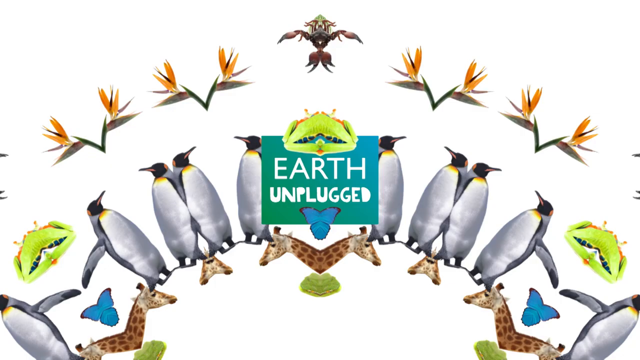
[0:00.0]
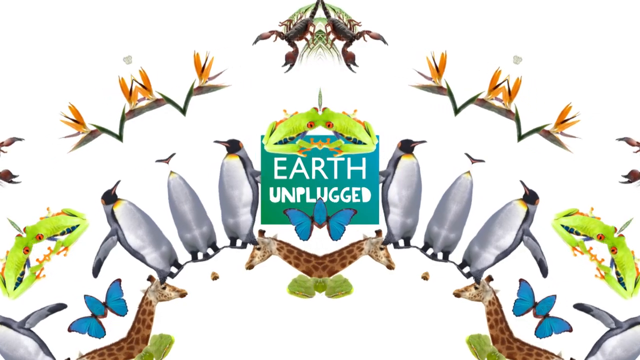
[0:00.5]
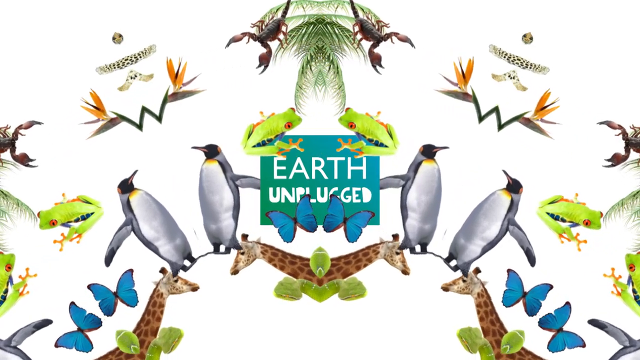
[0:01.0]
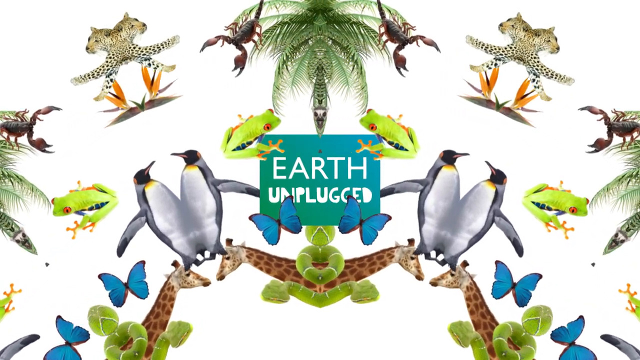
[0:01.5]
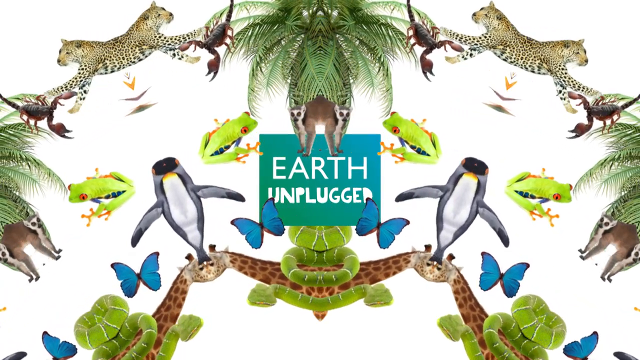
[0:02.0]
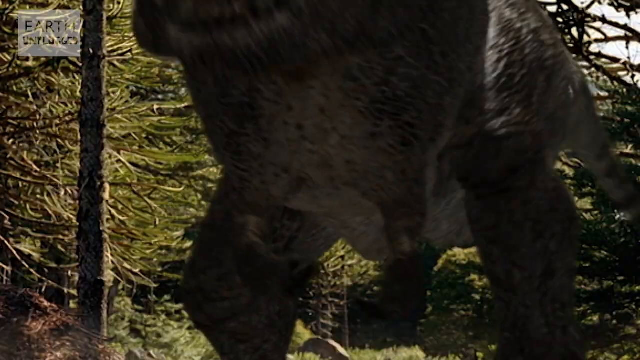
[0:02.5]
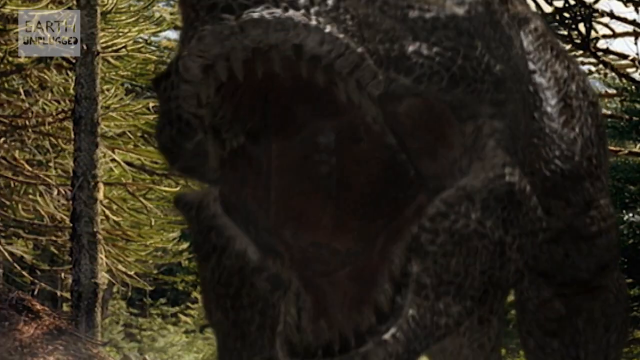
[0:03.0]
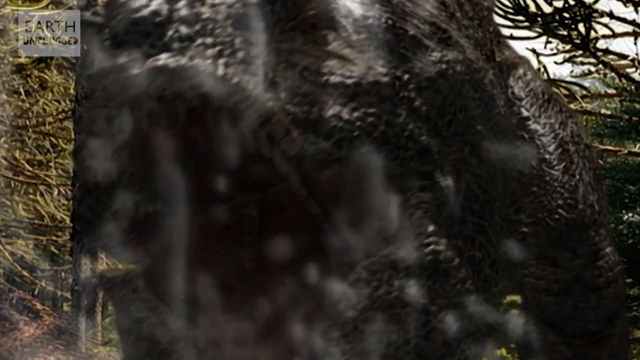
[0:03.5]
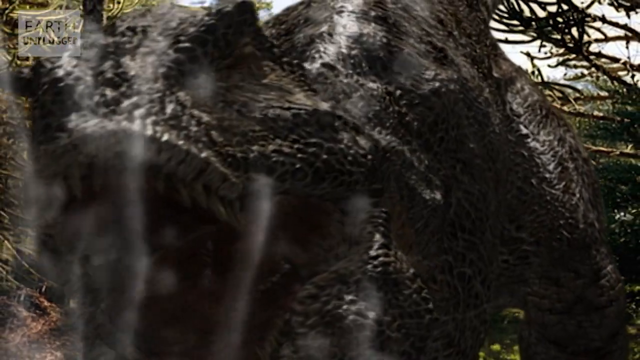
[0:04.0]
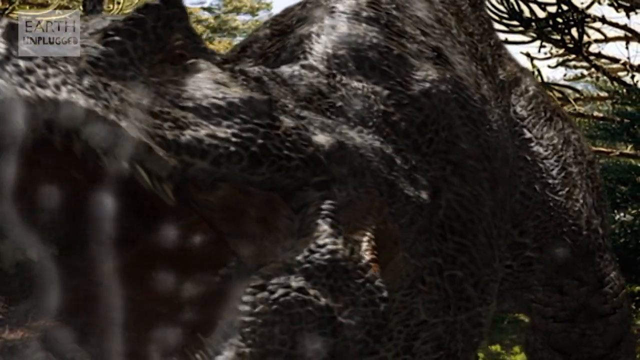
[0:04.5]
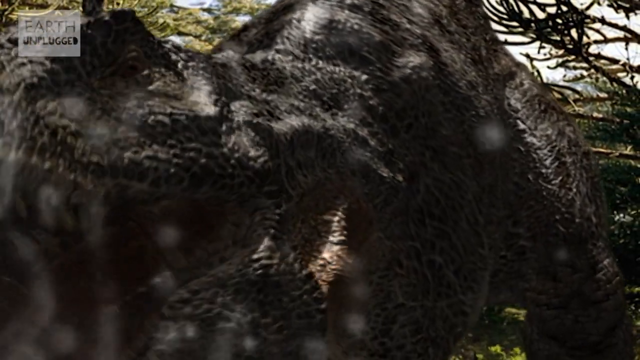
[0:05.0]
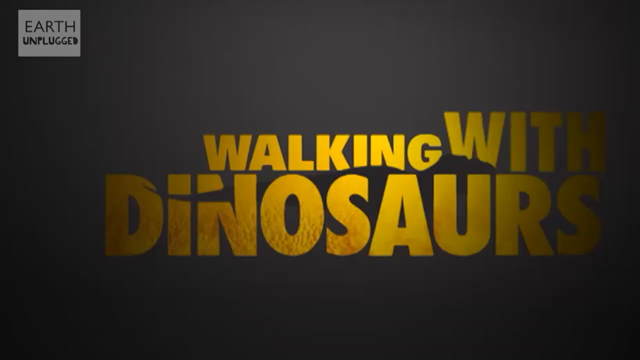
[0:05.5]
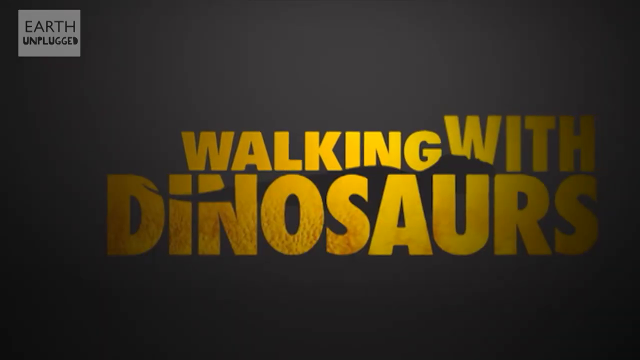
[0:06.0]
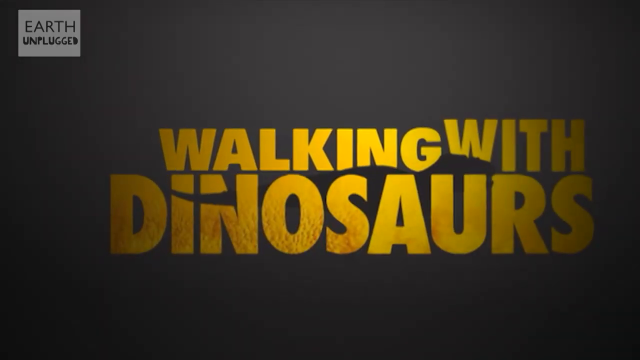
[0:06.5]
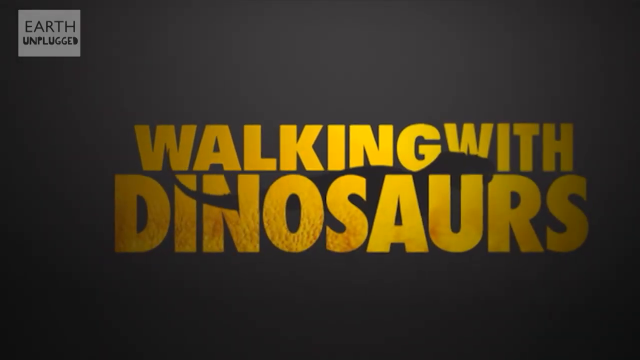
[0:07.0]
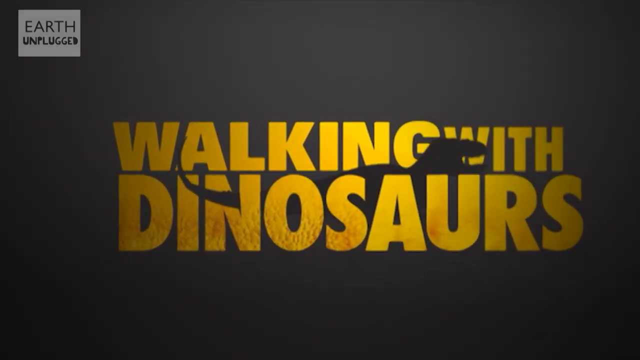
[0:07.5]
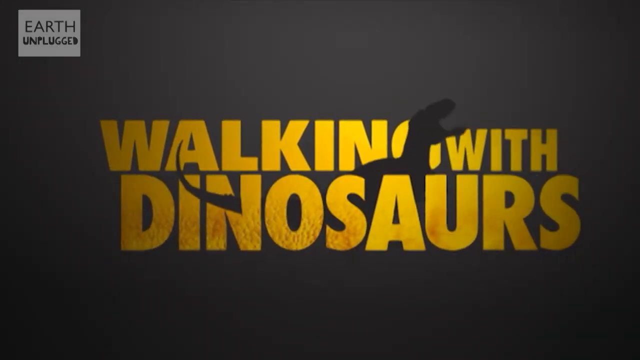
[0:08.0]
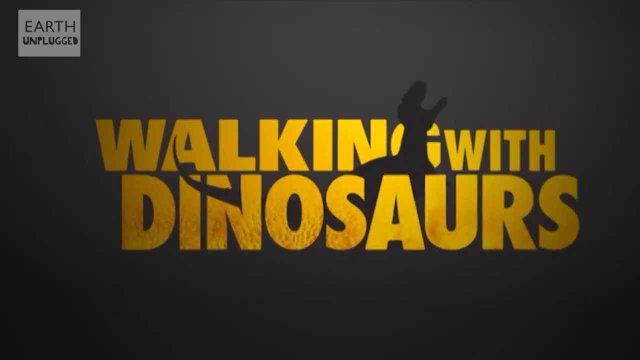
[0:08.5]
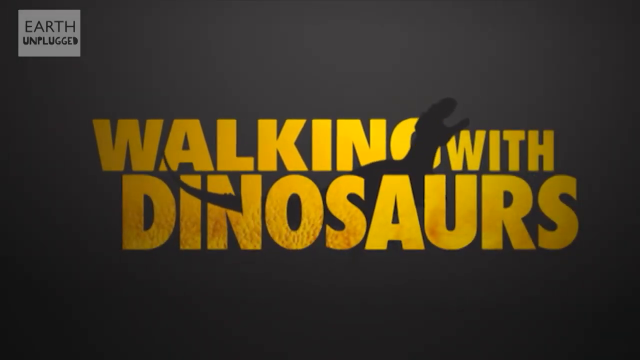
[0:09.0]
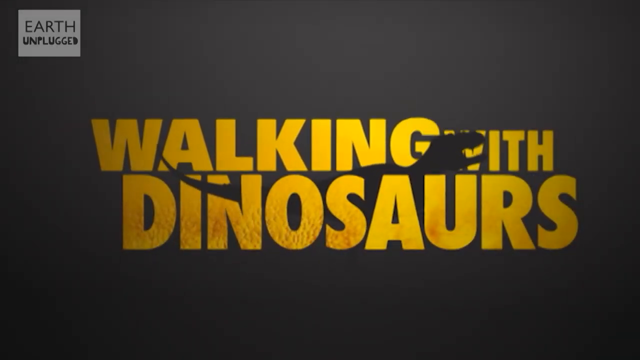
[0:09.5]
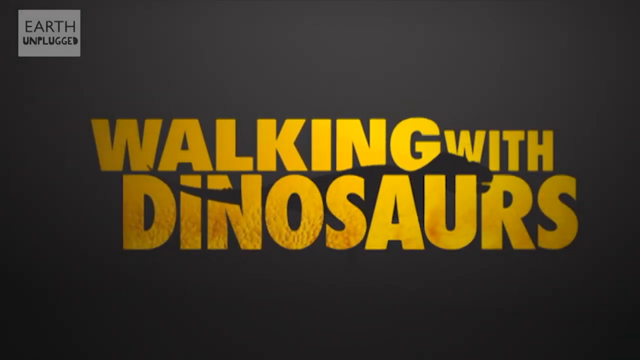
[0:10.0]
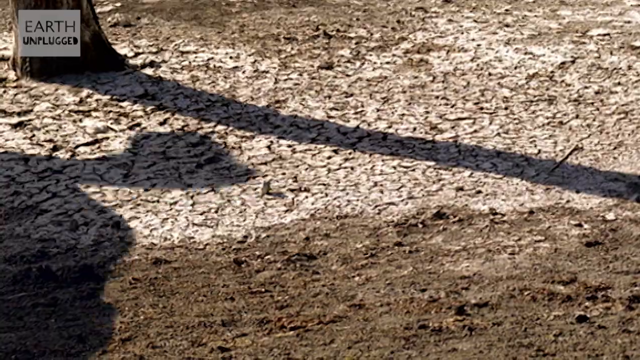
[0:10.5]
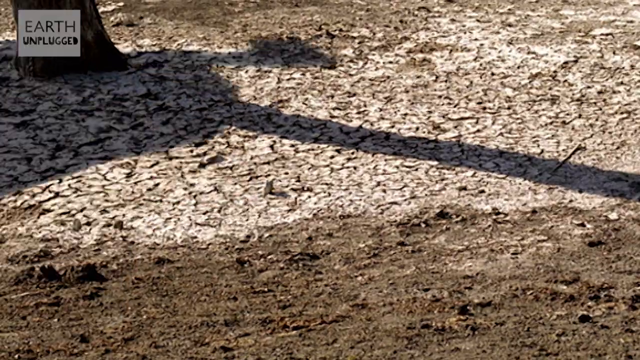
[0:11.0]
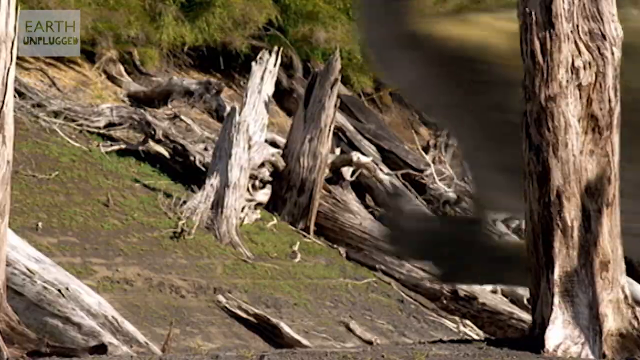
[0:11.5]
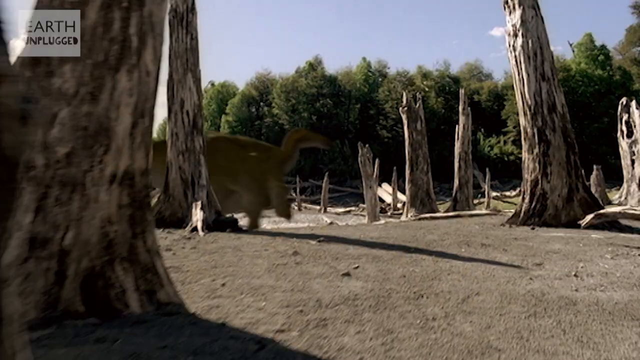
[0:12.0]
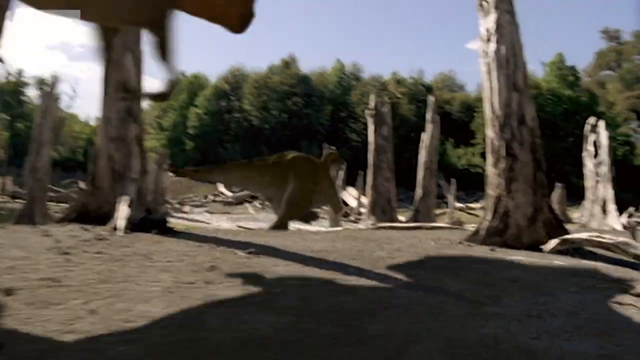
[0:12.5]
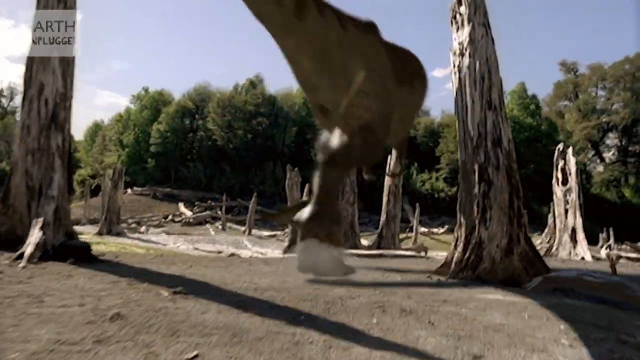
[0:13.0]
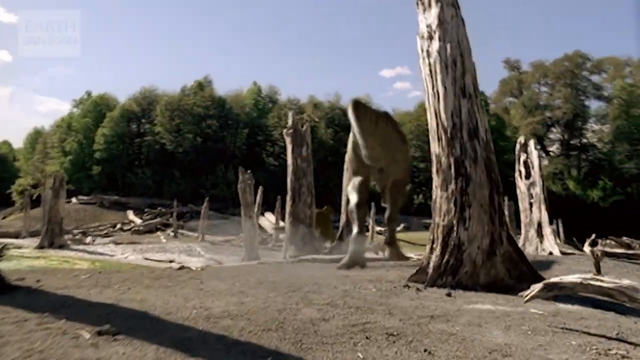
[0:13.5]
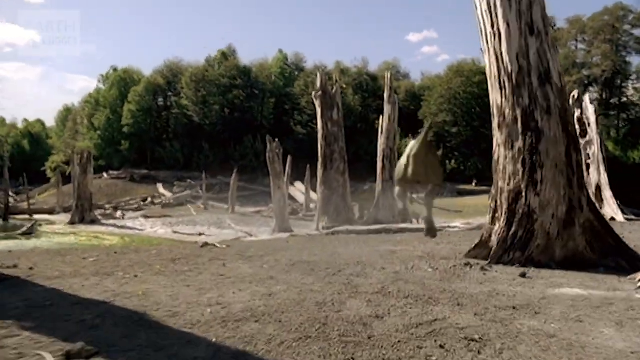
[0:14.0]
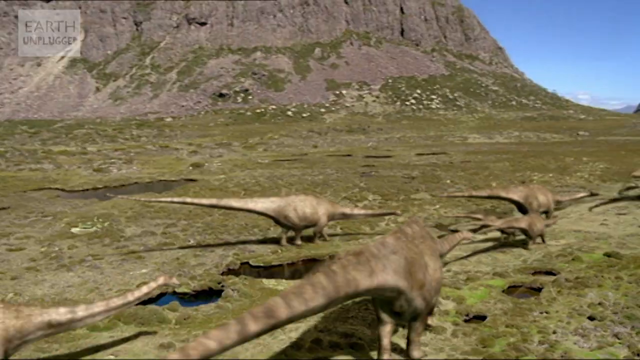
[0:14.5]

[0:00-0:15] The video opens with a graphic that says "earth unplugged" and a kaleidoscope of animals going into each other: a penguin, a giraffe, a frog, and apparently a peacock. Next, a T-Rex in the forest has its mouth open and appears to be roaring, with a graphic in the corner that says "earth unplugged"; in this shot the camera lens seems to be wet. Then the words "walking with dinosaurs" appear, with a silhouette behind them of a T-Rex lifting its head up and roaring. At the bottom, the word "earth" is in a circle, and underneath it says "subscribe." After that, a shadow of a dinosaur appears, a T-Rex runs, and a bunch of dinosaurs walk slowly.